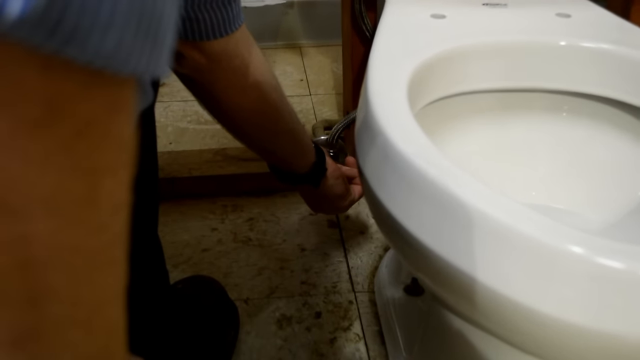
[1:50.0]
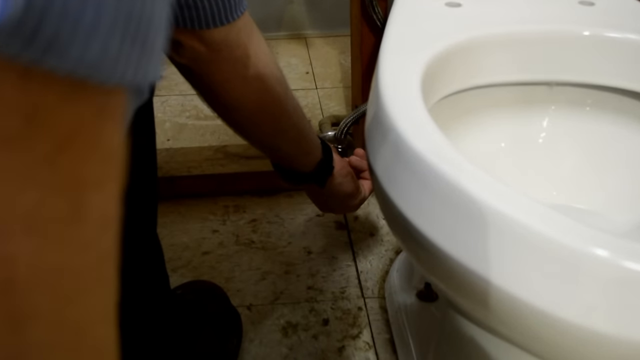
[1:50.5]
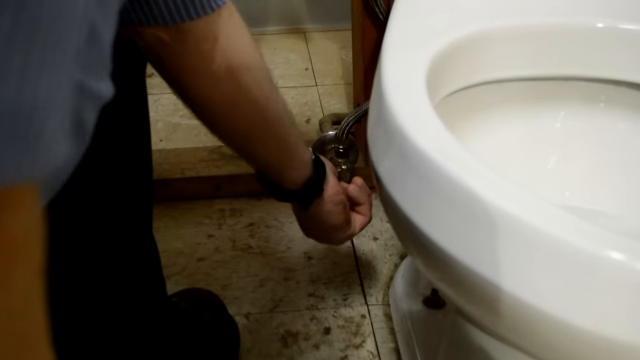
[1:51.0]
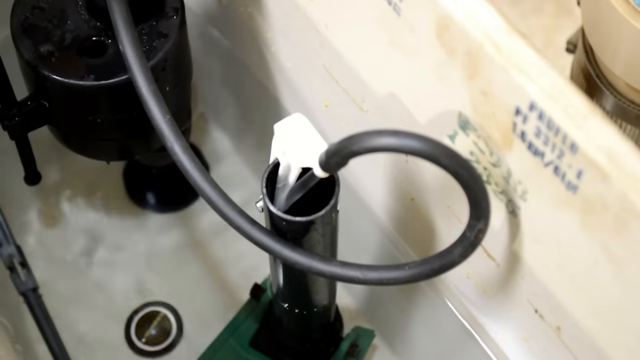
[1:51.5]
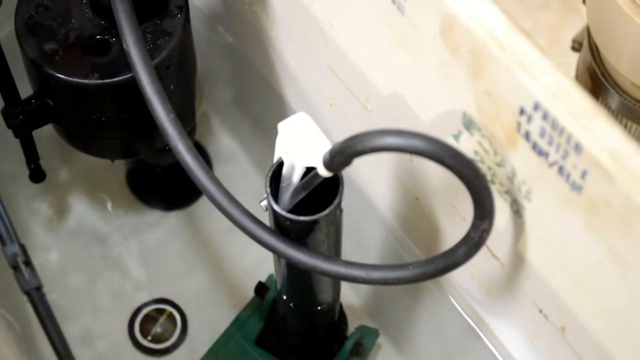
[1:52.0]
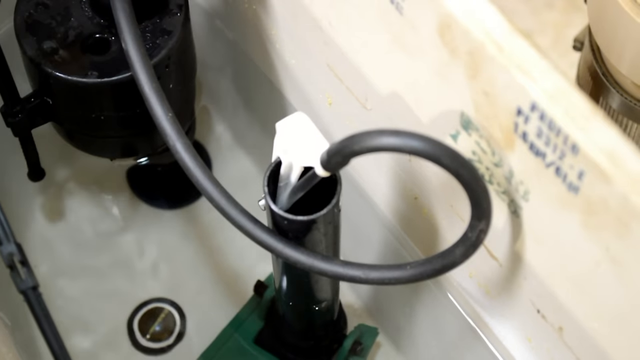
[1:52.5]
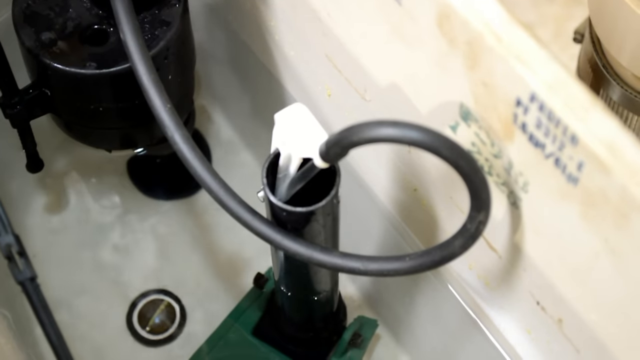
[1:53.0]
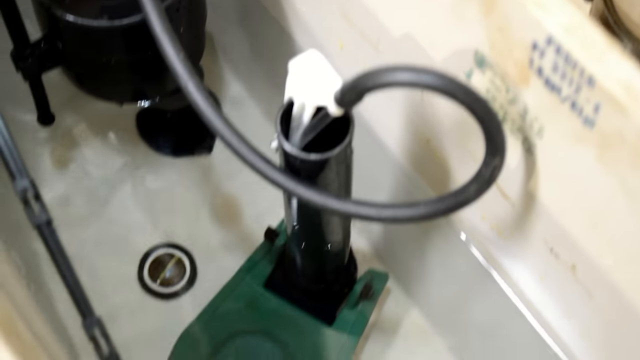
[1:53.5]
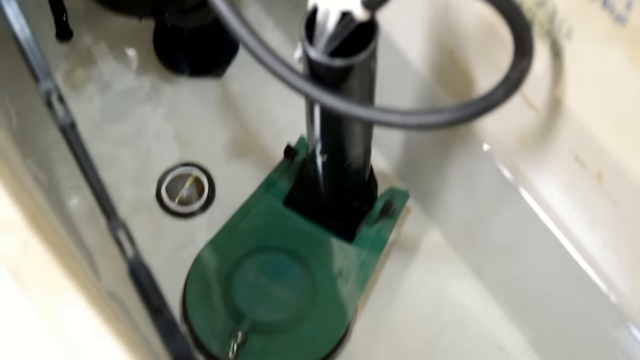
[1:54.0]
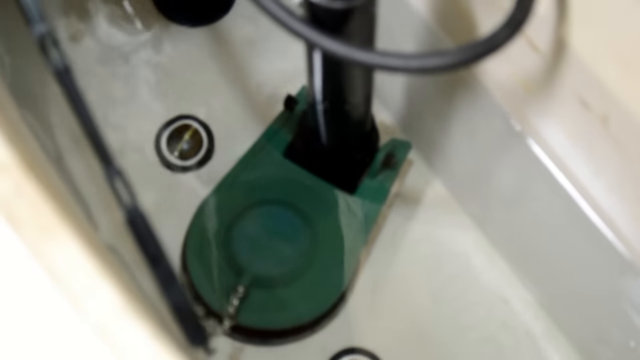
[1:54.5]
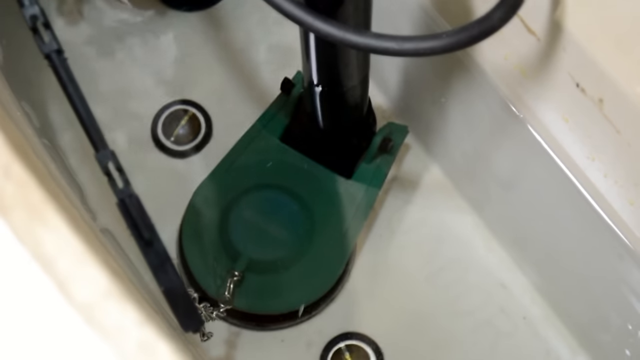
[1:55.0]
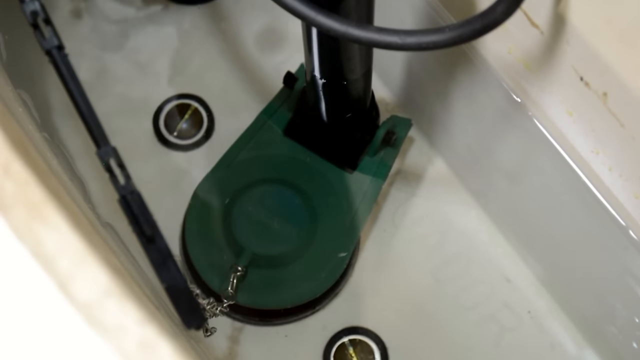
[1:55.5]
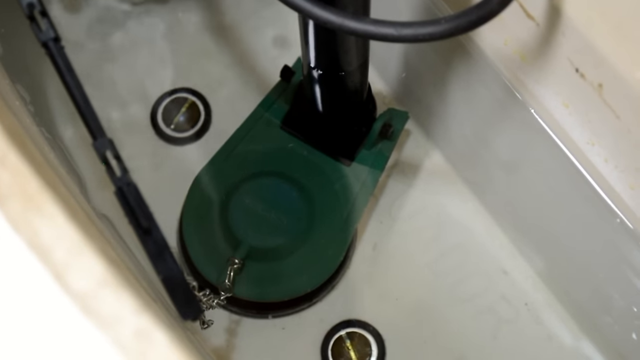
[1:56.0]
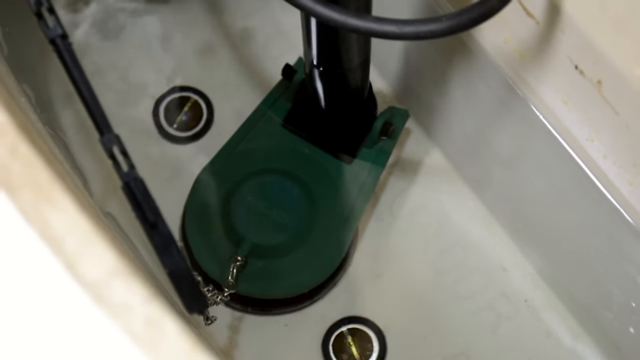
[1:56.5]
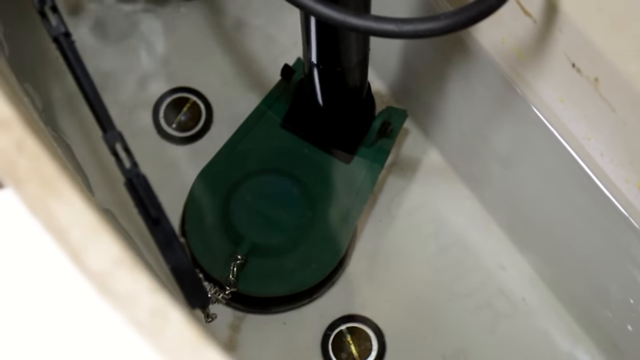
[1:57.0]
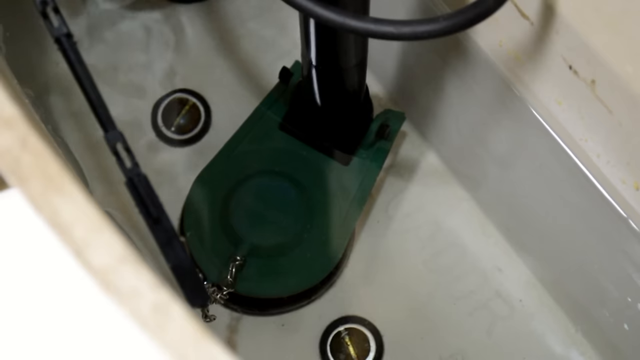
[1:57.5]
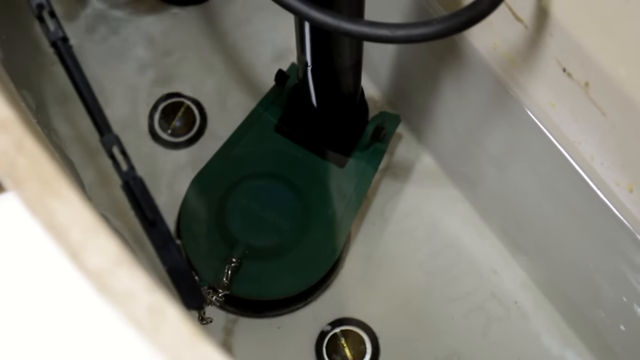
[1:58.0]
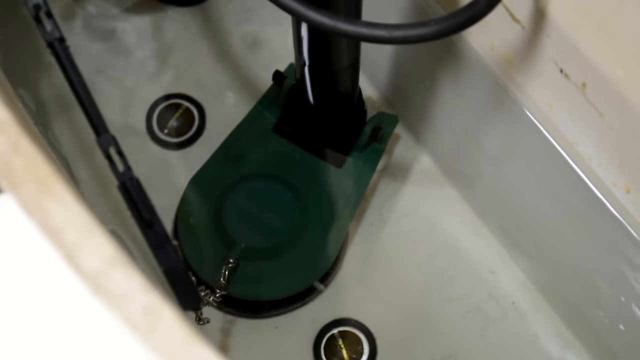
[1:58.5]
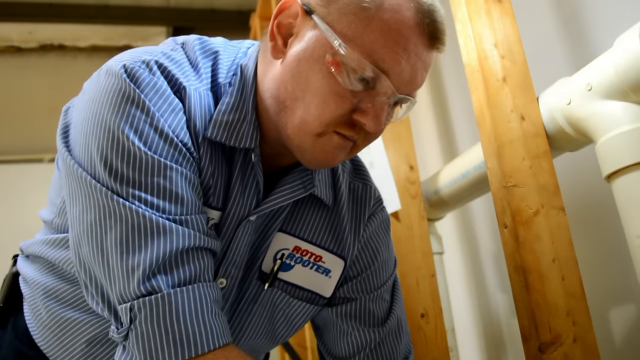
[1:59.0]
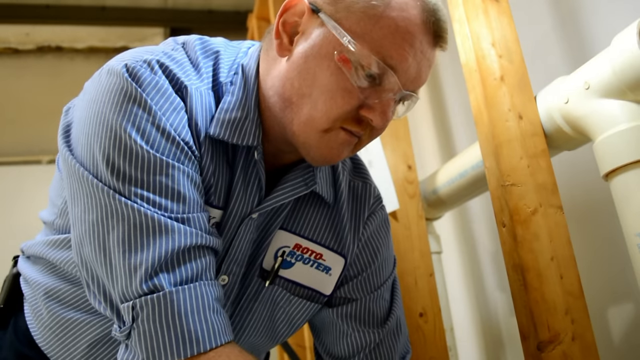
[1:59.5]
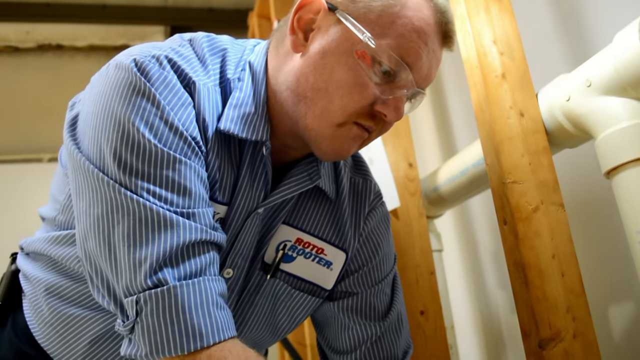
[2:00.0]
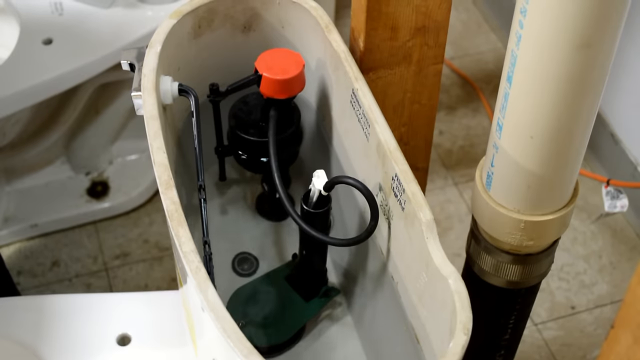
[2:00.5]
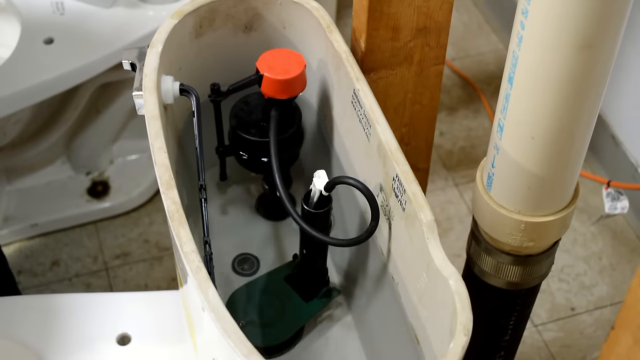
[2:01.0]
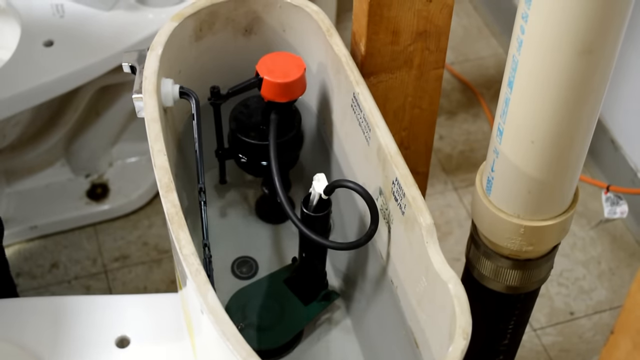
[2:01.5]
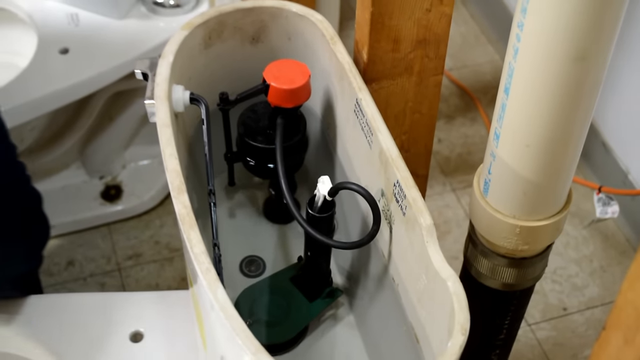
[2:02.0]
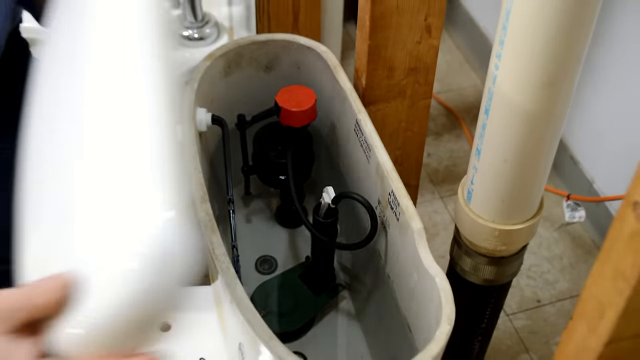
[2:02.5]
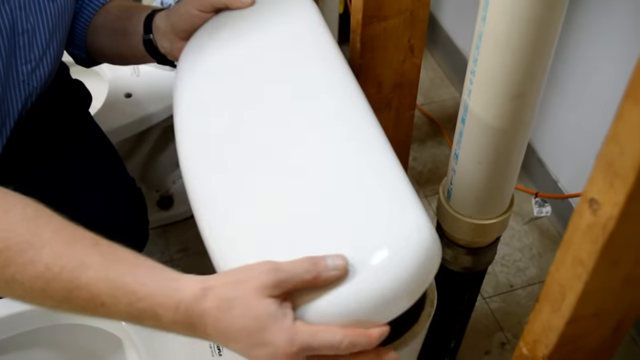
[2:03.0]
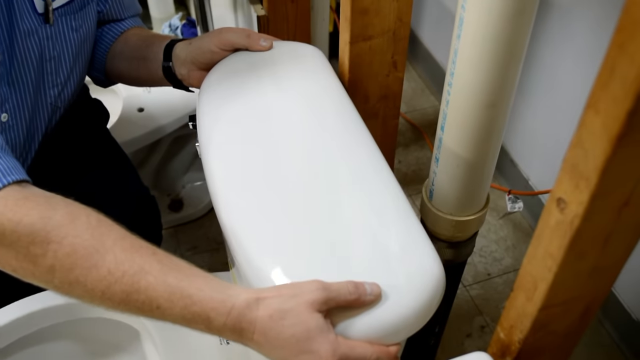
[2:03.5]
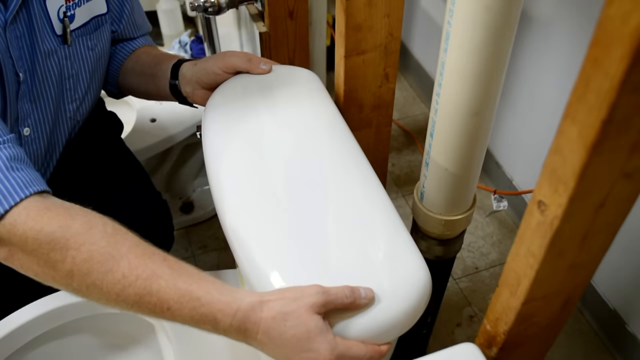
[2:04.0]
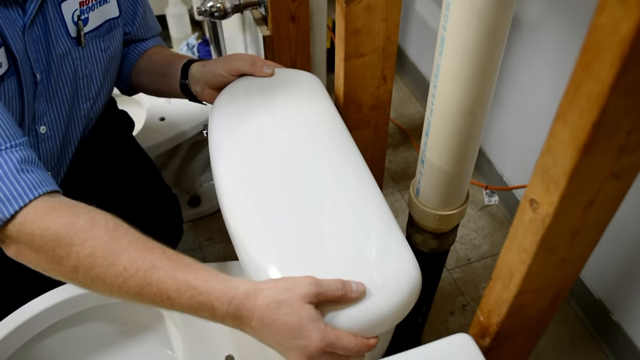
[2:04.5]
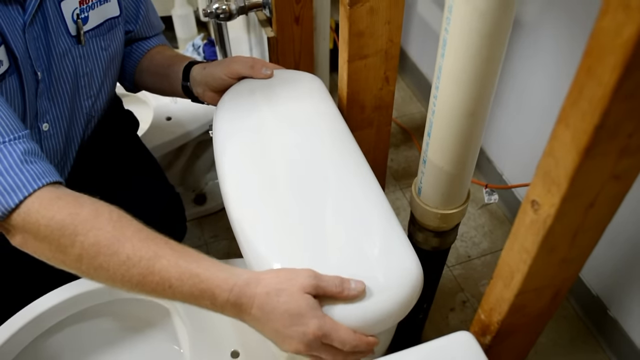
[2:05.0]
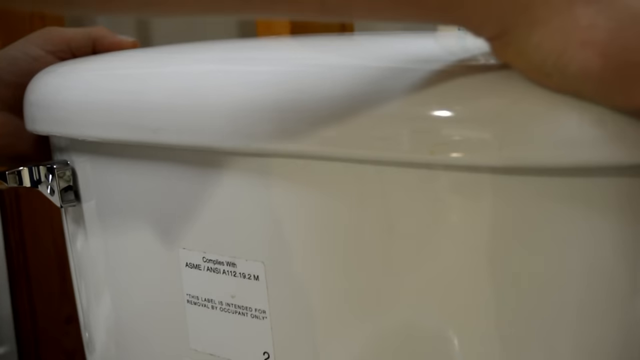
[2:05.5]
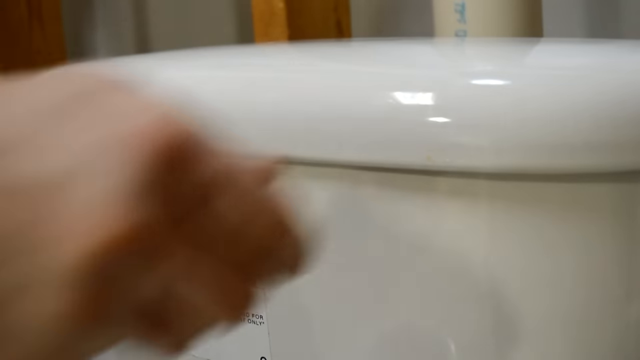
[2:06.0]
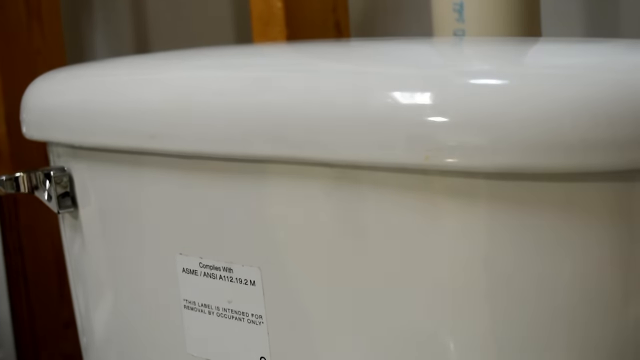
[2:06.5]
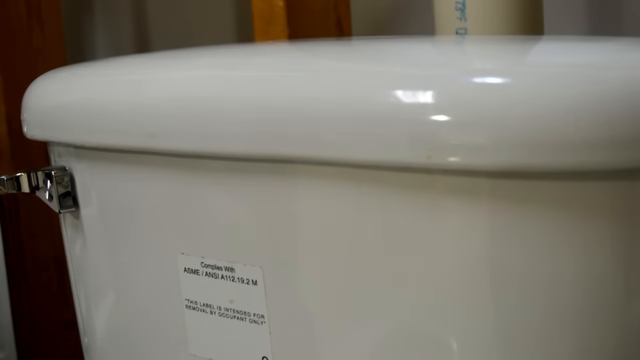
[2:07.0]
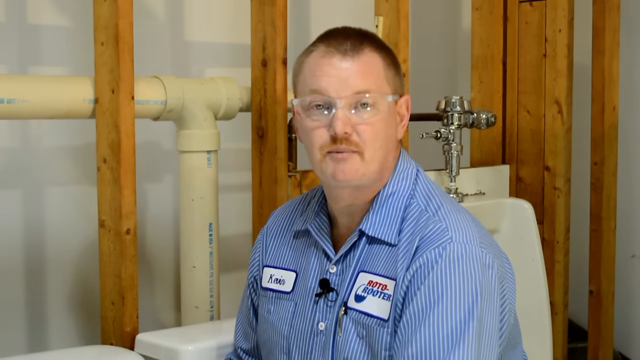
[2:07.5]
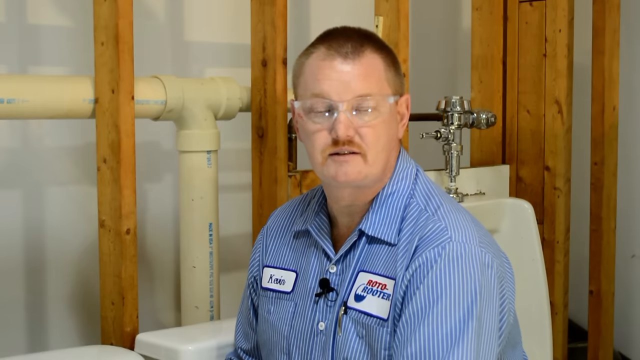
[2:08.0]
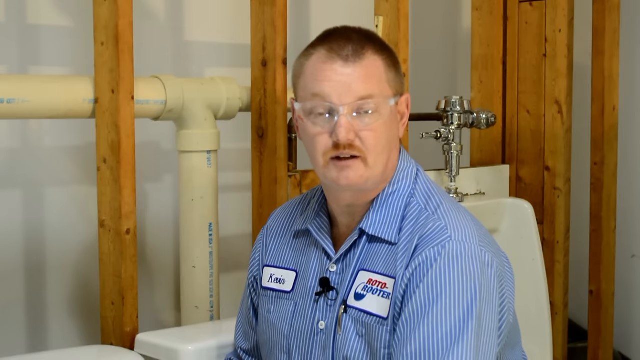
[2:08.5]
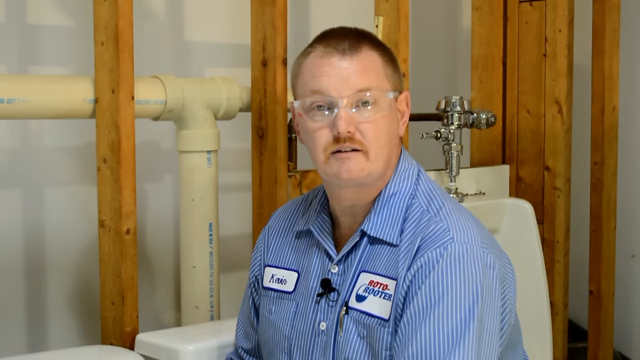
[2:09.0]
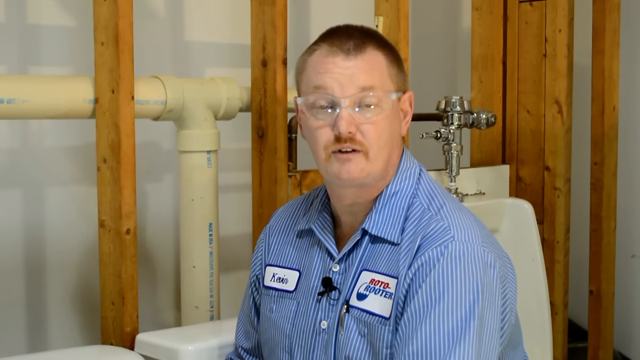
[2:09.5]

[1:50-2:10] The plumber opens the valve so the water rises to the proper height. The camera shows the inside of the tank filling slowly but surely, and the level is clearly visible, especially in the upper right corner, against the walls of the tank. The plumber looks inside to check that everything works, then puts the cap of the toilet tank back on, makes sure it is placed without a gap, and takes his hands off it. He then talks to the camera. In the background are the pipes that carry water to the toilets, another metallic mechanism in another type of toilet that the plumber does not explore, and wood separating the toilets, with the pipes behind it.